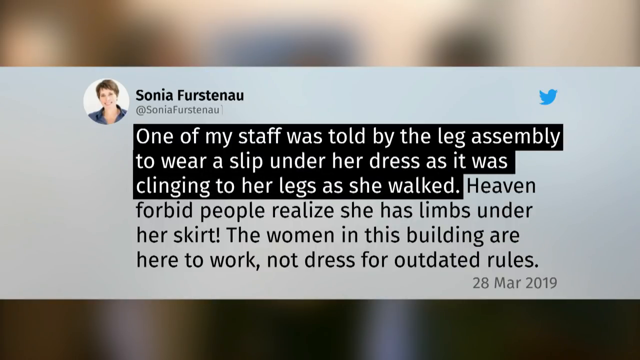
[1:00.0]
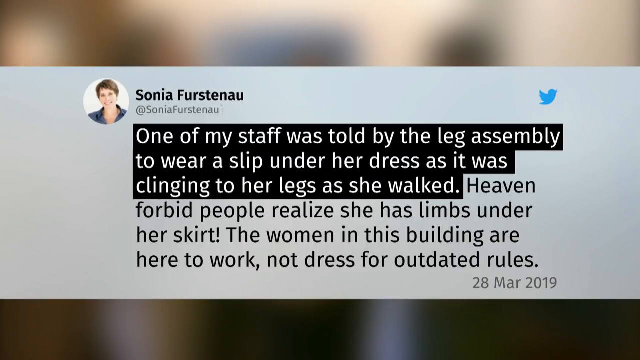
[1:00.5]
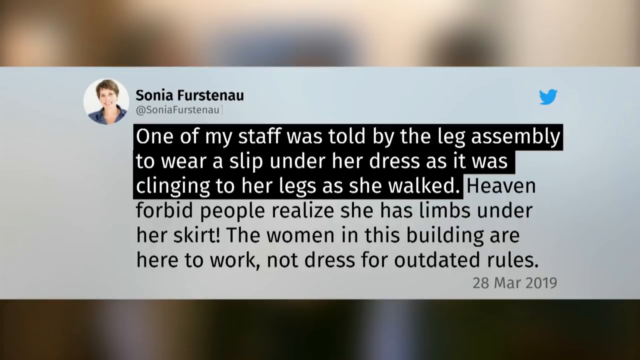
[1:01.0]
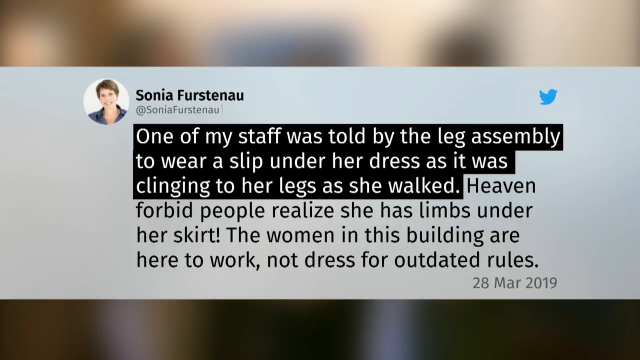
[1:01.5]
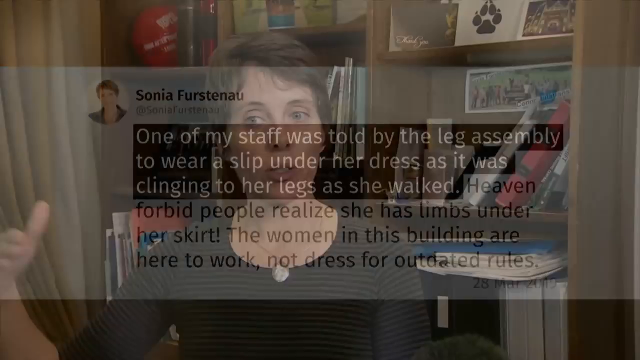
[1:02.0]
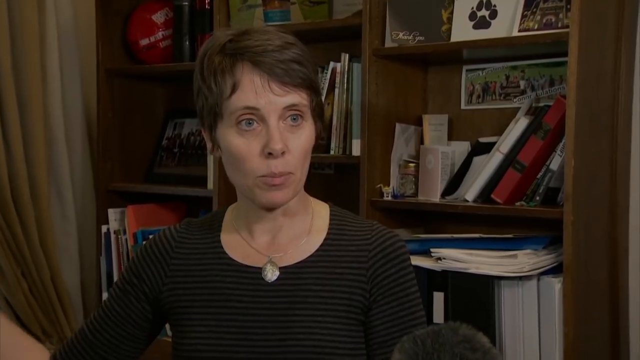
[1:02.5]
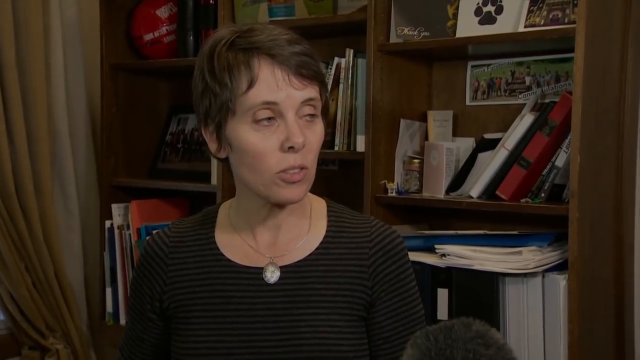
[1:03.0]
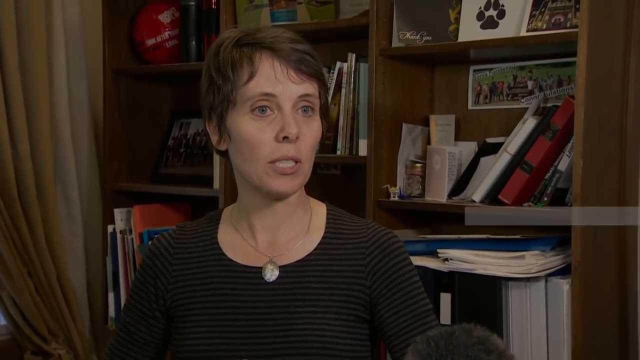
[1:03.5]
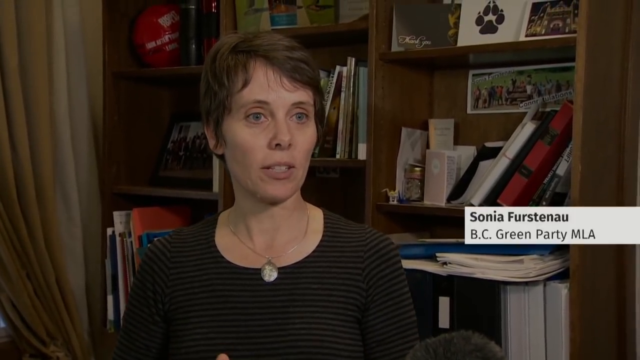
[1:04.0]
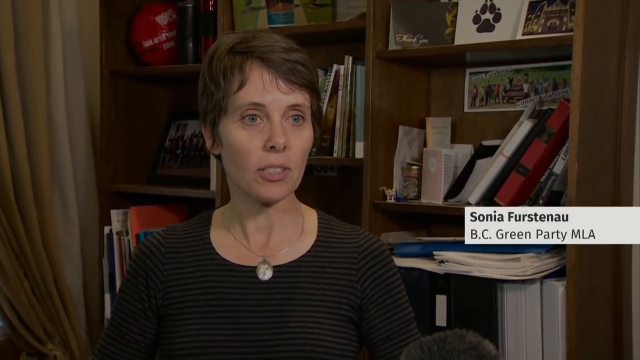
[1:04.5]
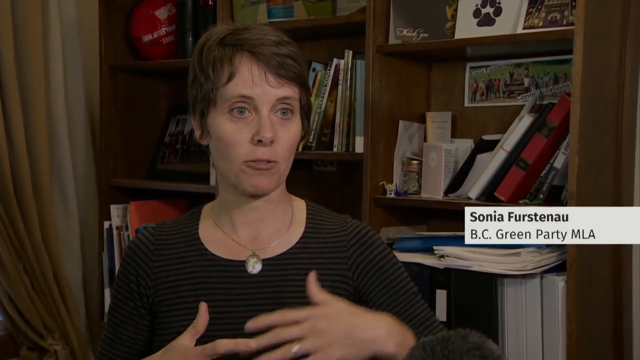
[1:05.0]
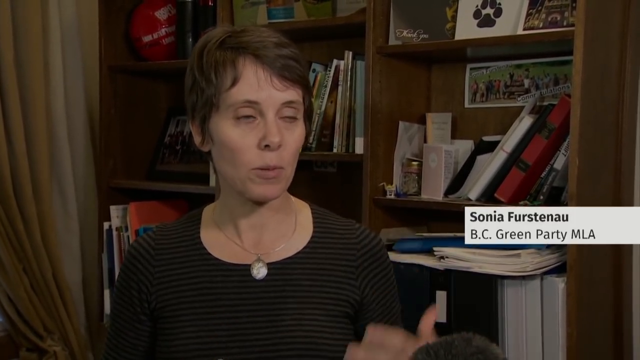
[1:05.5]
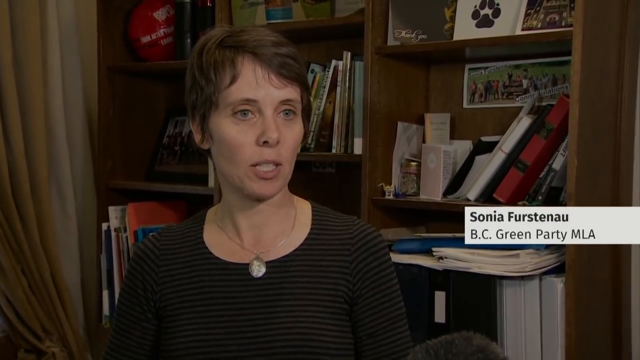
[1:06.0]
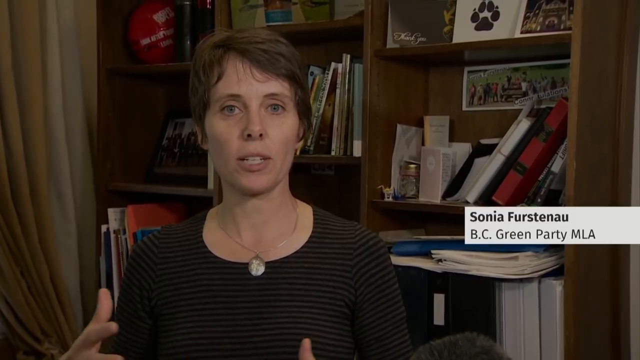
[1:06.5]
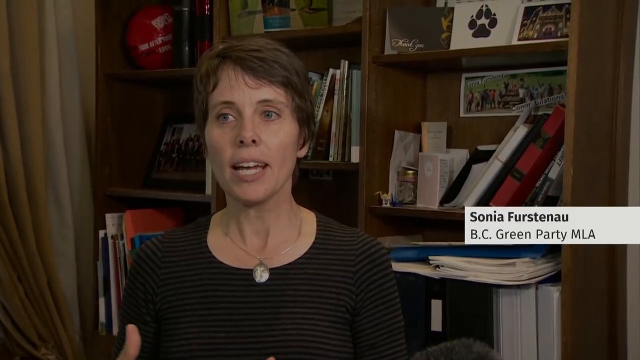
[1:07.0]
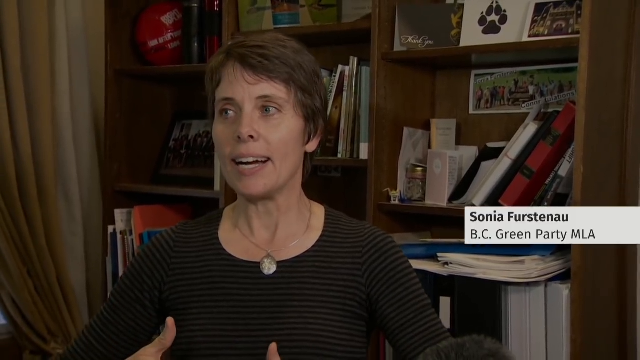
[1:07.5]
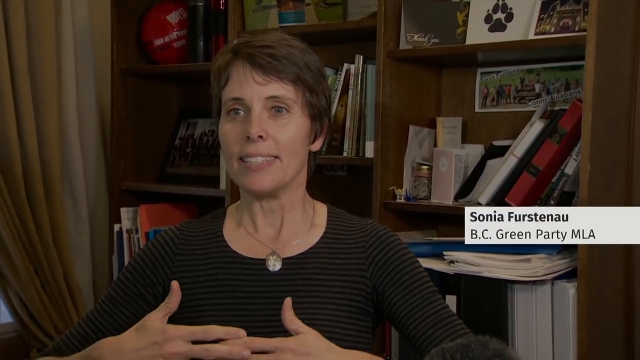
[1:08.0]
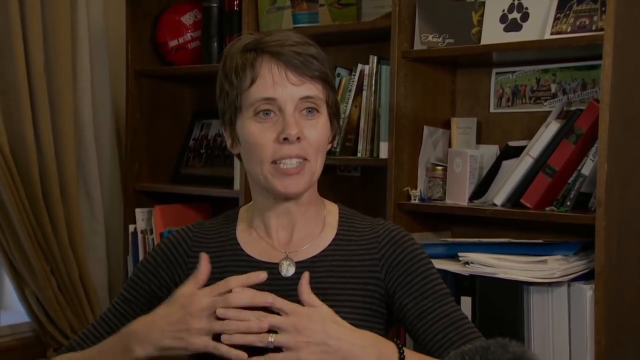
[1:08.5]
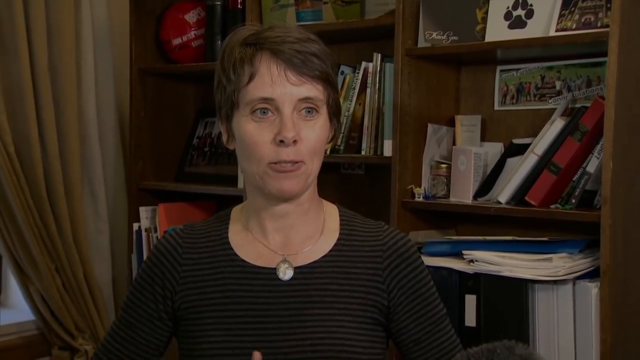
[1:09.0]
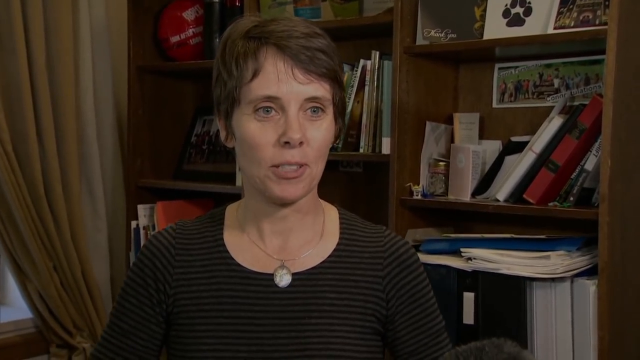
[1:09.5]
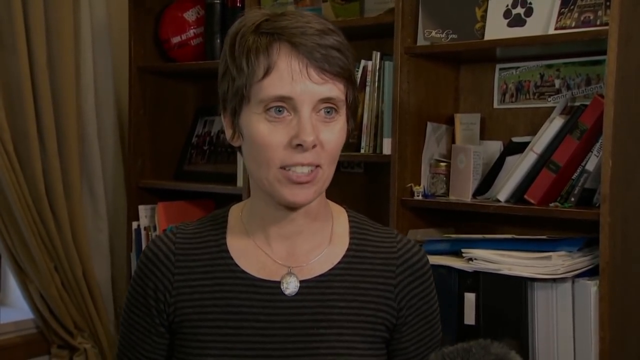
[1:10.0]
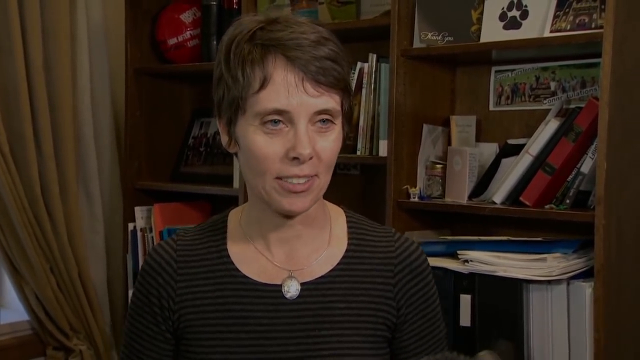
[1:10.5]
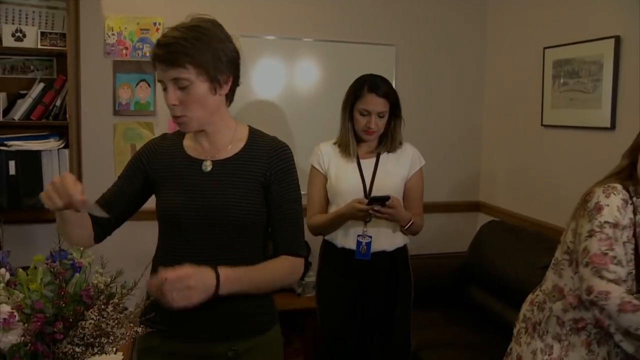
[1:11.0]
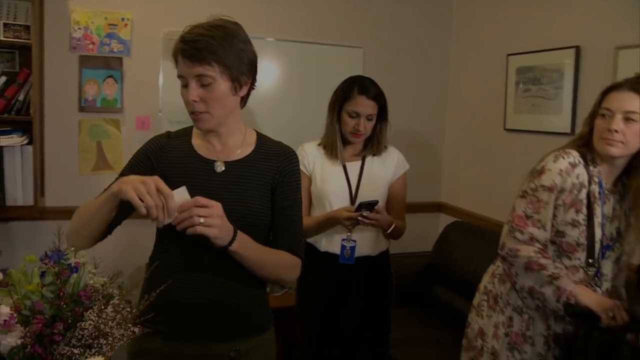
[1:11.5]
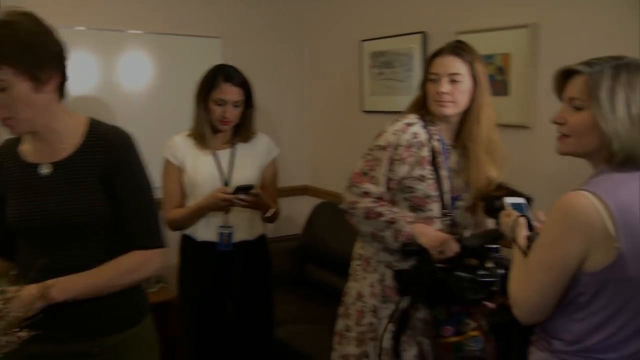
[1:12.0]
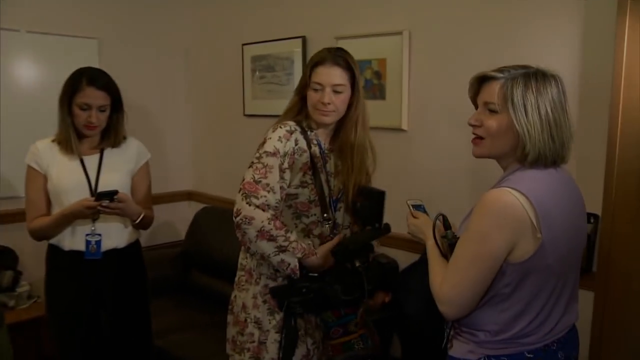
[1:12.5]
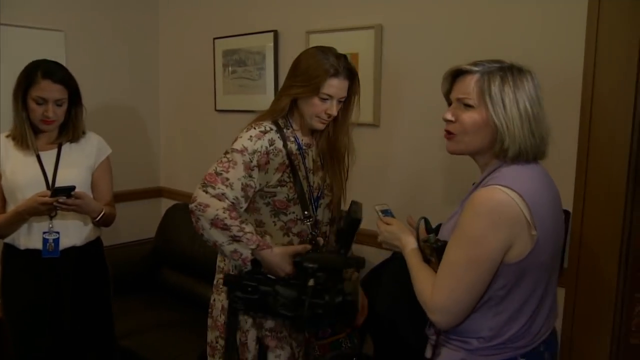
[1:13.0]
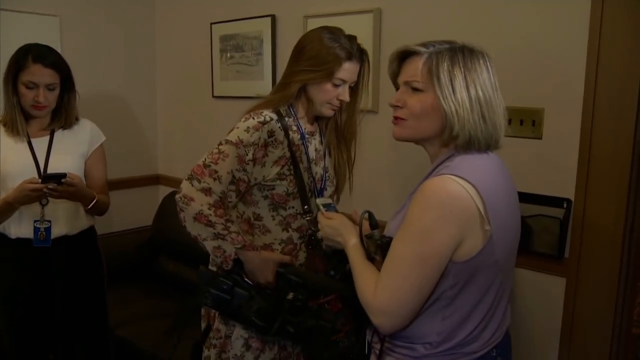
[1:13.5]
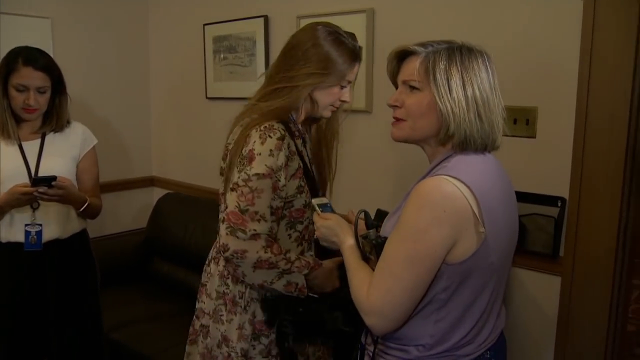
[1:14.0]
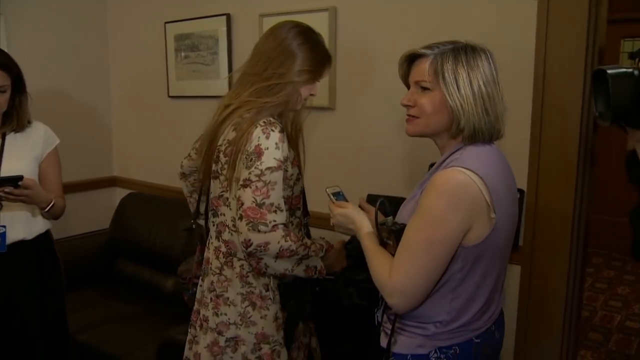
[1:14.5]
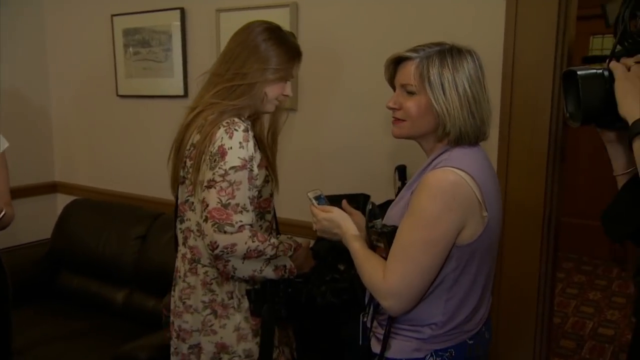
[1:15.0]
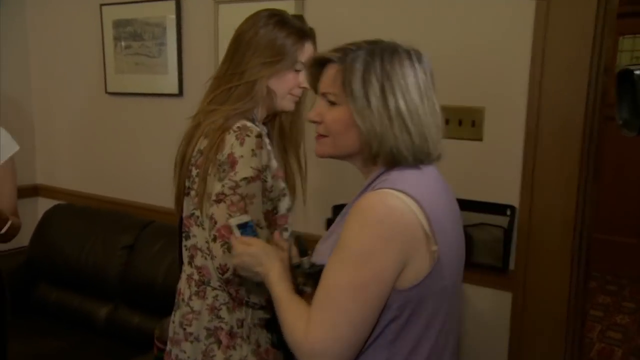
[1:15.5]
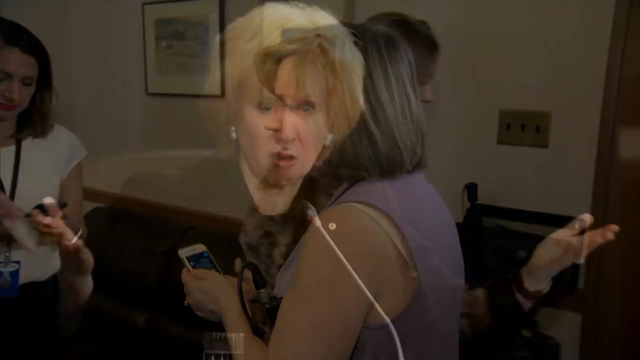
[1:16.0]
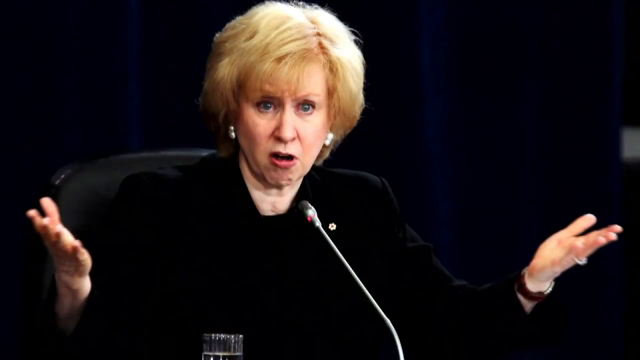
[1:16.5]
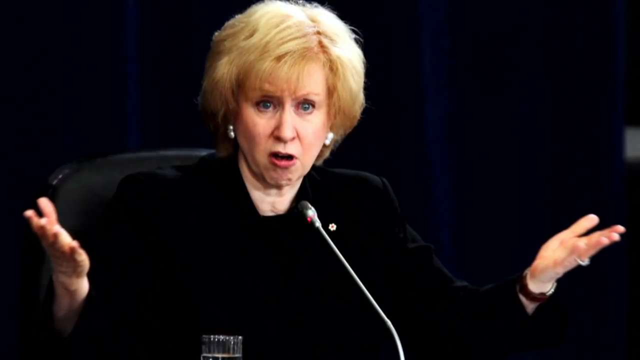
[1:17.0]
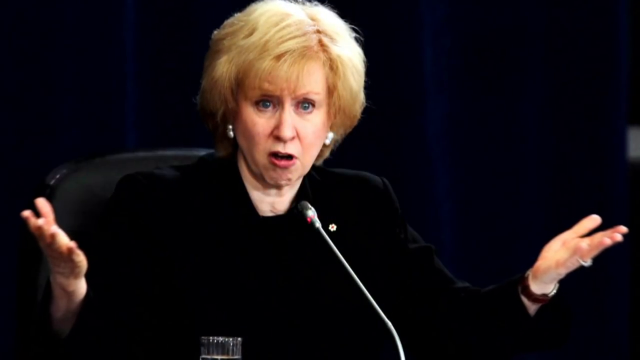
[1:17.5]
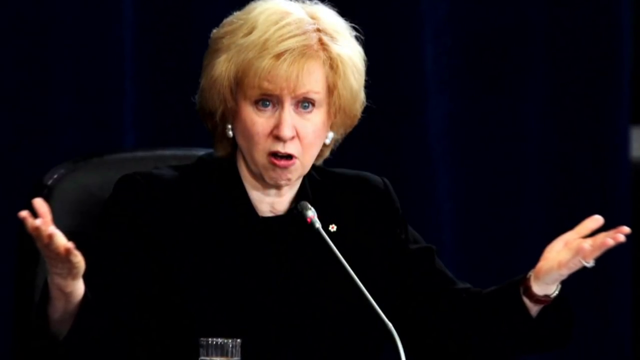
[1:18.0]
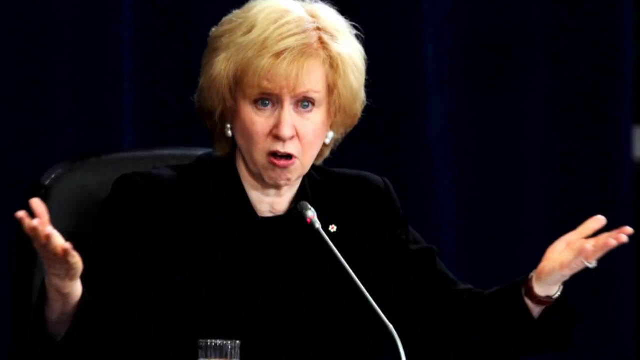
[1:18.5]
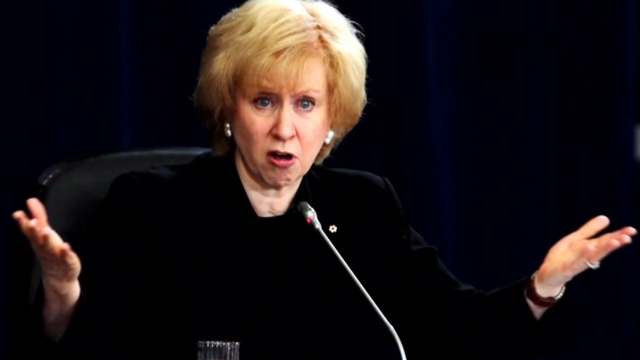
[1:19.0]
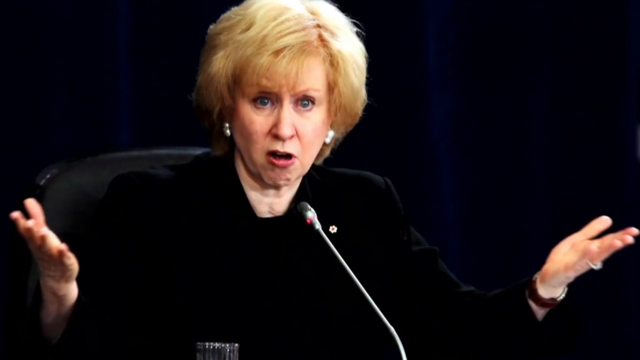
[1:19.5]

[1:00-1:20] A tweet by Sonia Furstenau appears in the middle of the screen, reading: "One of my staff was told by the leg assembly to wear a slip under her dress, as it was clinging to her legs as she walked. Heaven forbid people realize that she has a slip under her skirt. The women in this building are here to work, not dressed for outdated rules." The video cuts to Sonia Furstenau, the BC Green Party MLA, speaking towards the camera in front of a background of books and photos; she is white, with short brown hair and blue eyes. Footage then shows her with three other women, two holding phones and one holding a video camera, speaking with each other and seeming to laugh a bit. Finally, a picture shows a white woman with blue eyes and short, messy blonde hair sitting on a black chair in front of a microphone, raising both hands to the sides of her body with her palms pointing to the ceiling.